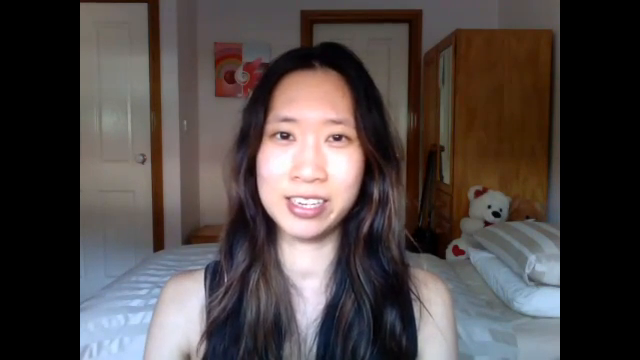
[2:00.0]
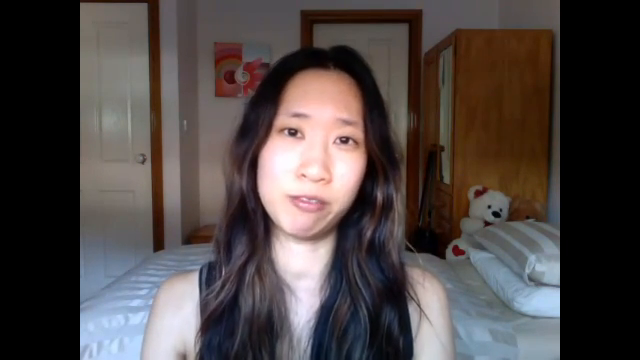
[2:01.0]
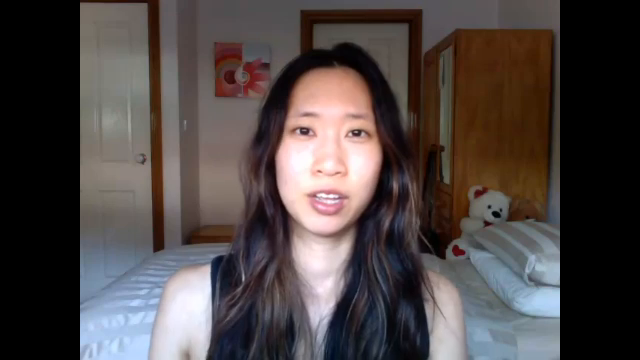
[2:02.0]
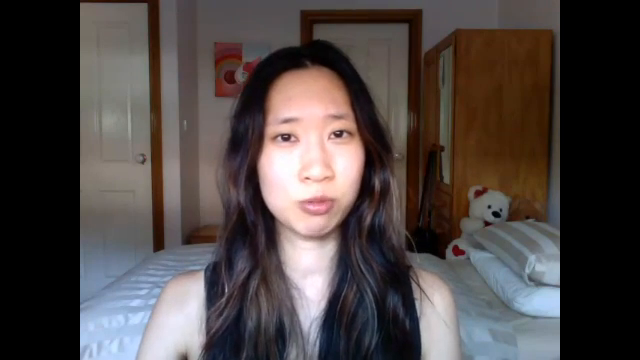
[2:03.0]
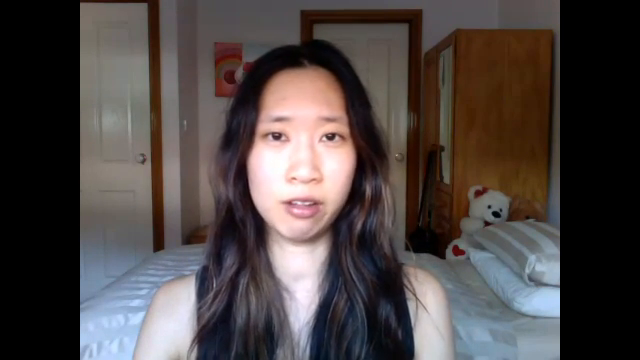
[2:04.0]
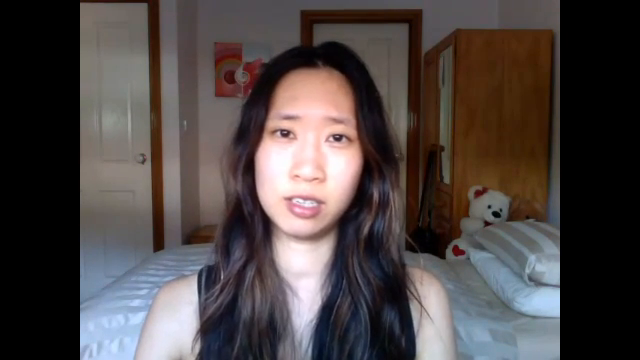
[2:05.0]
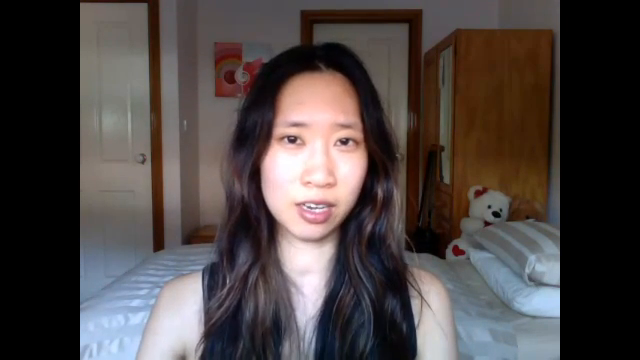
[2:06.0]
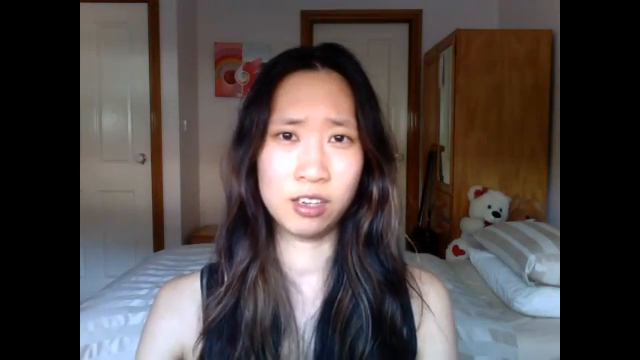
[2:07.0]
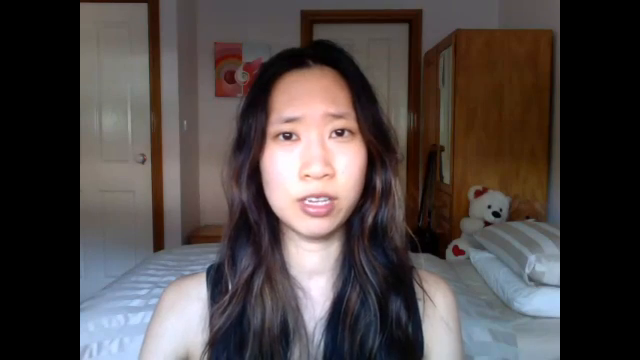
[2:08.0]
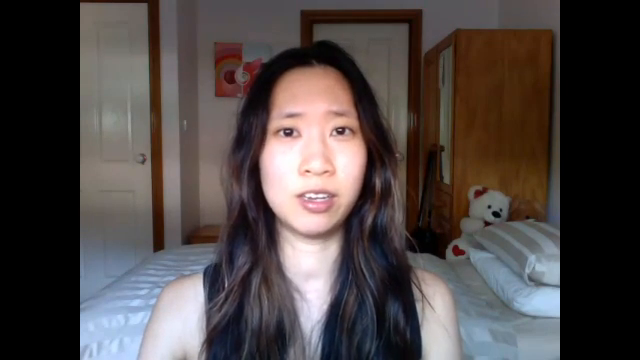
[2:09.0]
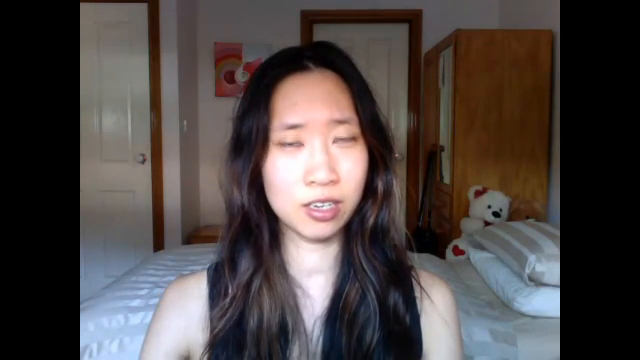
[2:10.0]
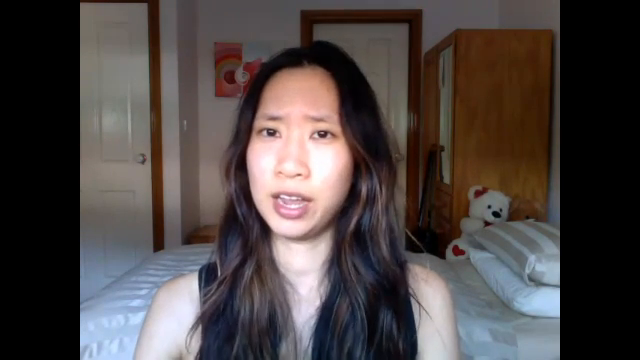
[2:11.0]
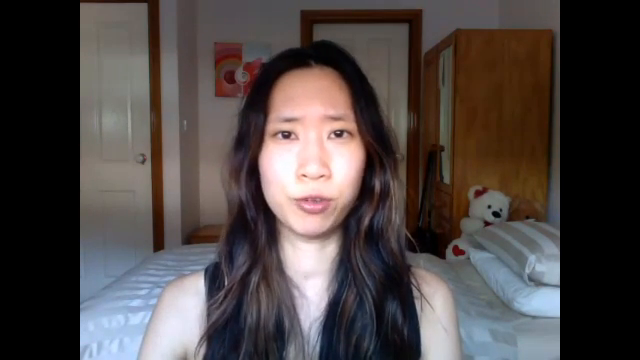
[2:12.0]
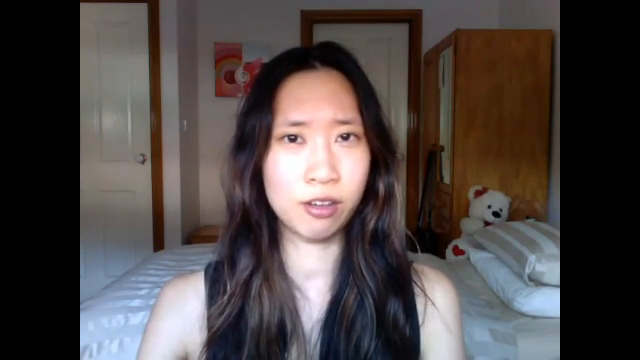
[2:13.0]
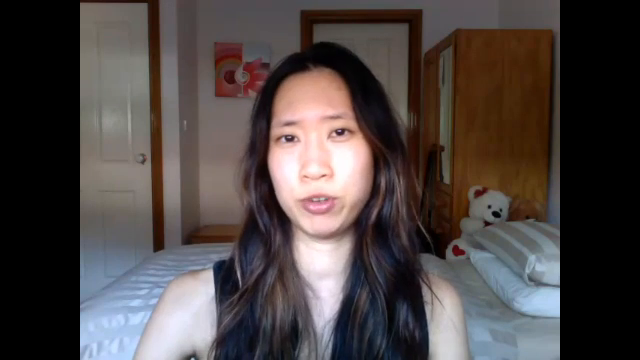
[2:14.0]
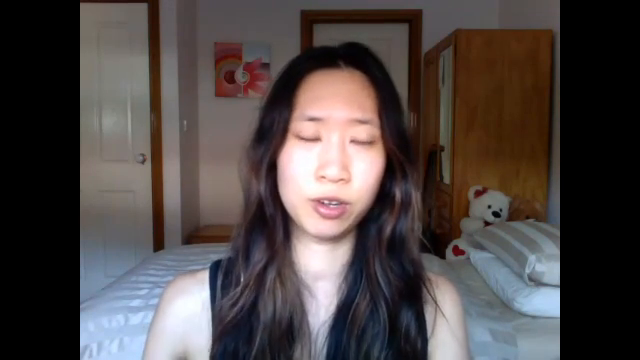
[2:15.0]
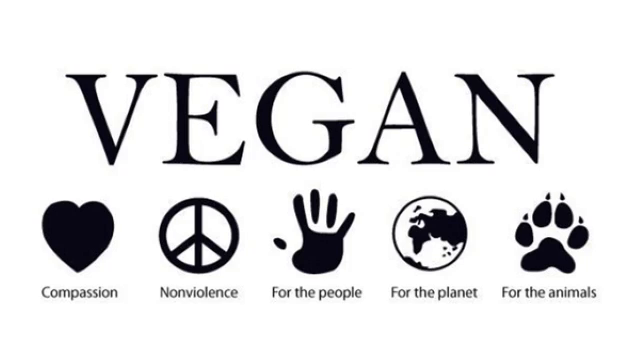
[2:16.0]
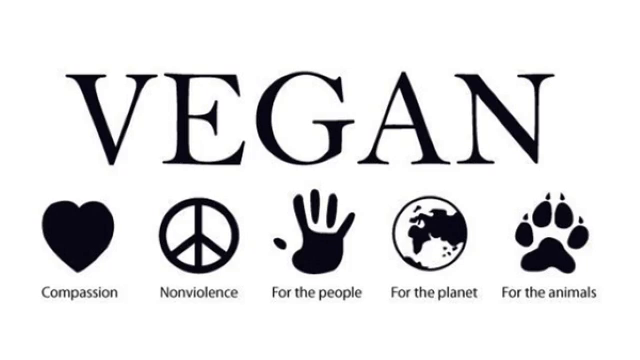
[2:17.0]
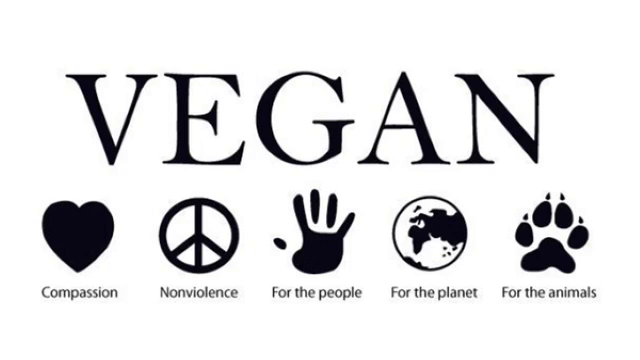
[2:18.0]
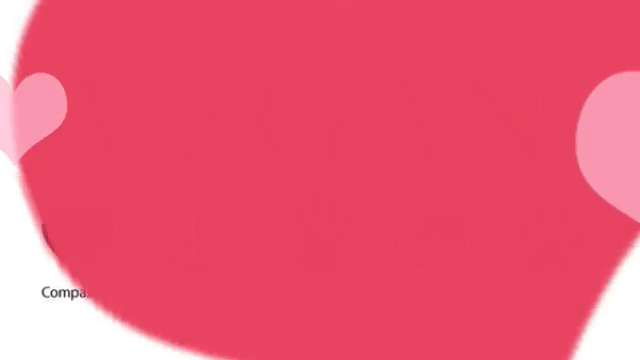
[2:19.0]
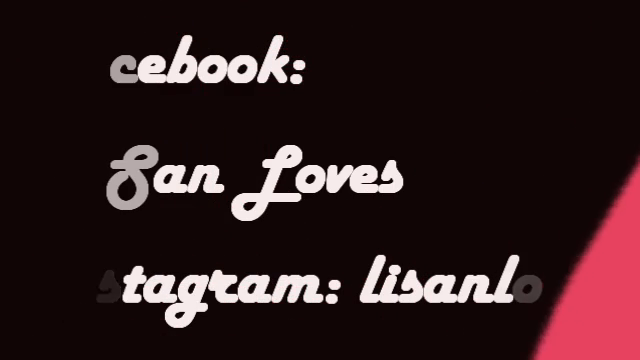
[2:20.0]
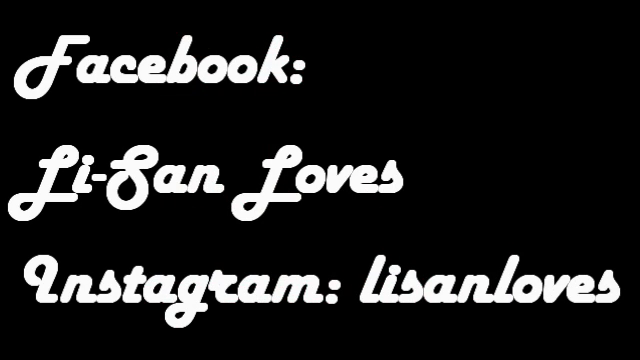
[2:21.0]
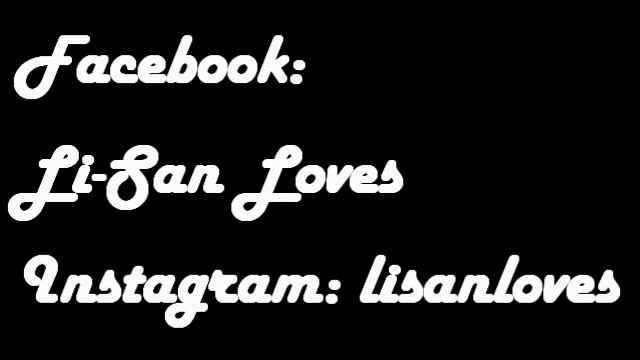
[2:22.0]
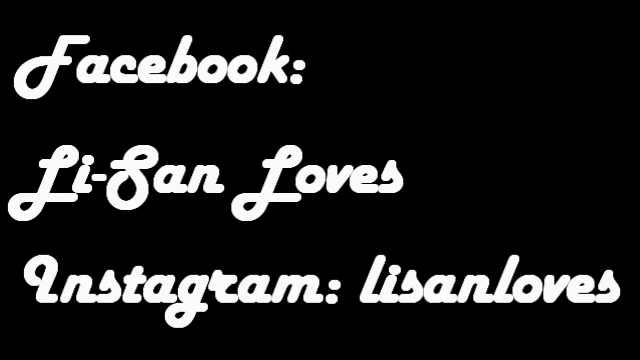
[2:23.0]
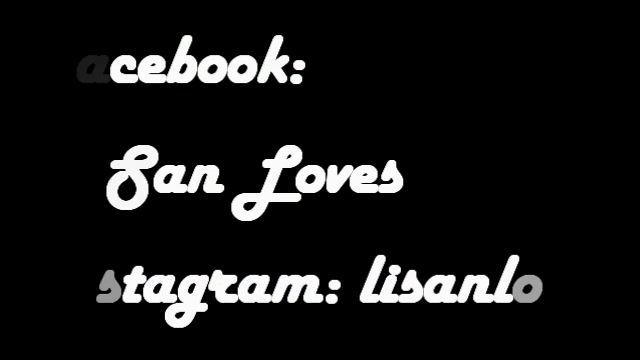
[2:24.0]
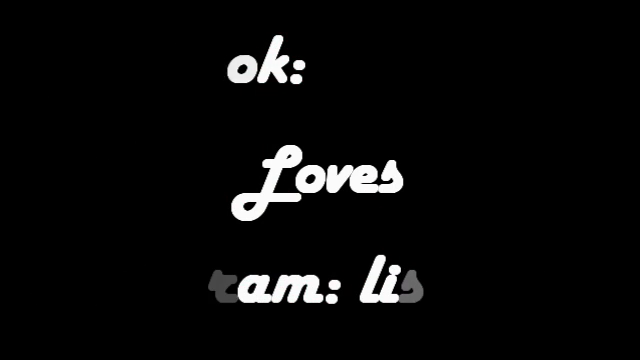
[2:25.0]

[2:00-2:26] There seems to be a look of concern in the woman's eyes and face. A card then appears with "vegan" printed on top, in what kind of looks to be perhaps a Times New Roman font. Under it are icons: a heart with "compassion" beneath it, a peace sign with "non-violence", a handprint with "for the people", an icon of the earth with "for the planet", and a palm print with "for the animals". The final title card reads "Facebook Lisa Loves" and shows the Instagram handle "Lisa Loves".